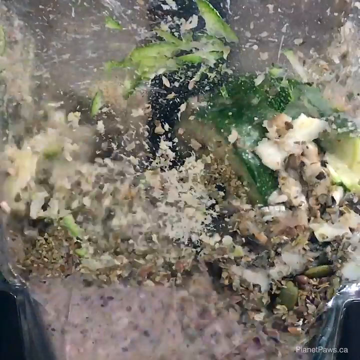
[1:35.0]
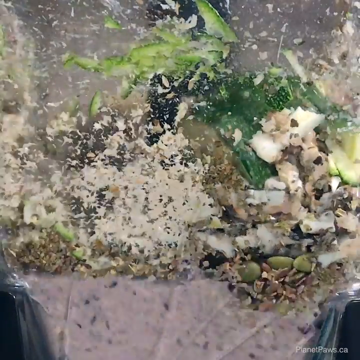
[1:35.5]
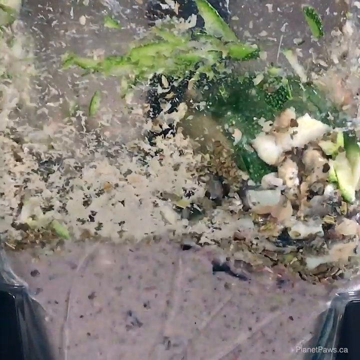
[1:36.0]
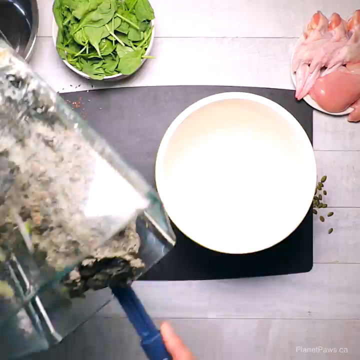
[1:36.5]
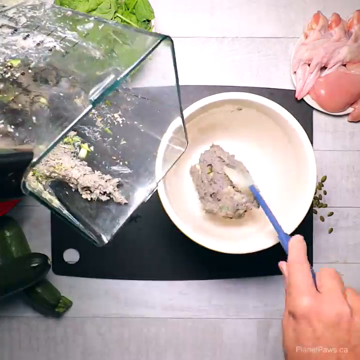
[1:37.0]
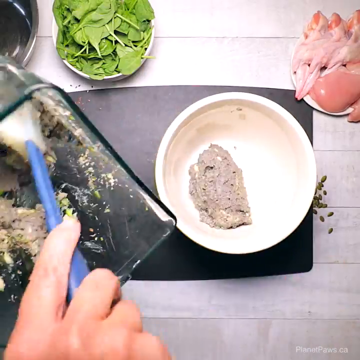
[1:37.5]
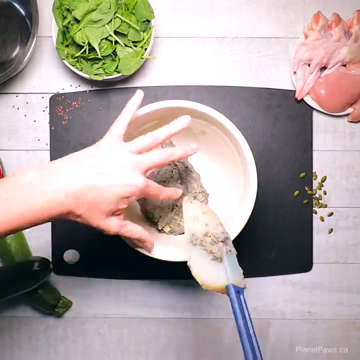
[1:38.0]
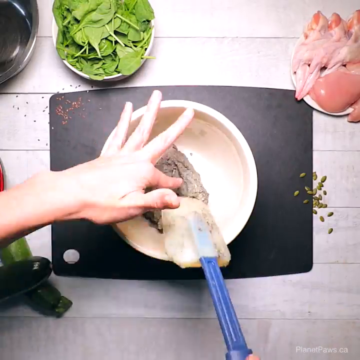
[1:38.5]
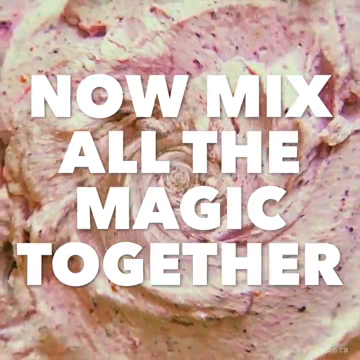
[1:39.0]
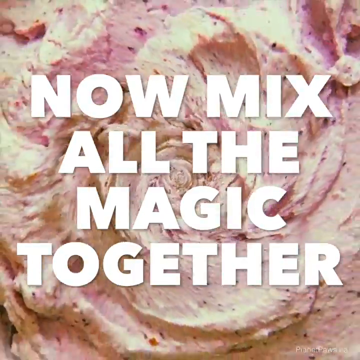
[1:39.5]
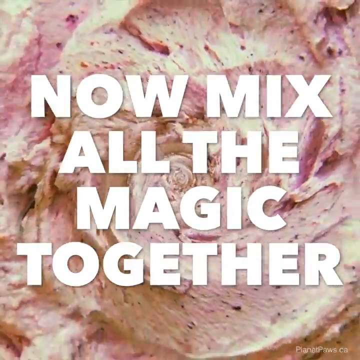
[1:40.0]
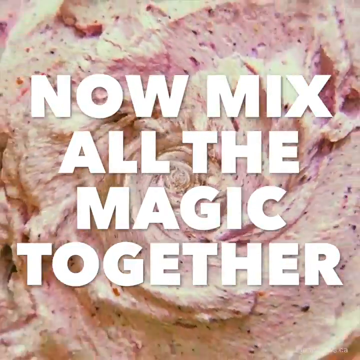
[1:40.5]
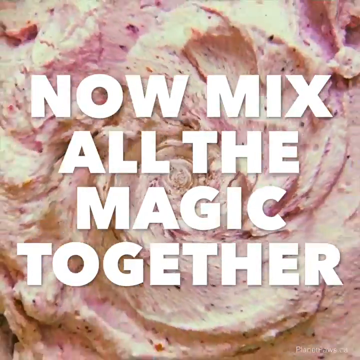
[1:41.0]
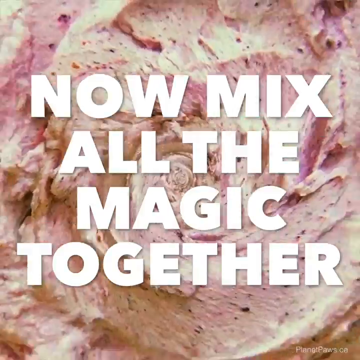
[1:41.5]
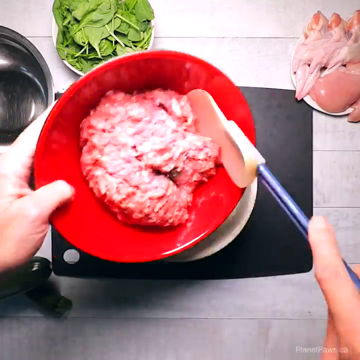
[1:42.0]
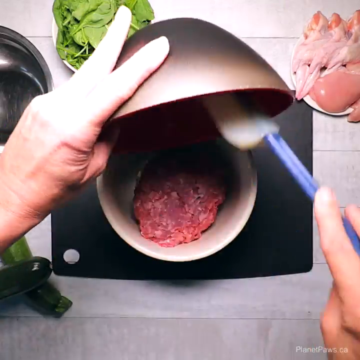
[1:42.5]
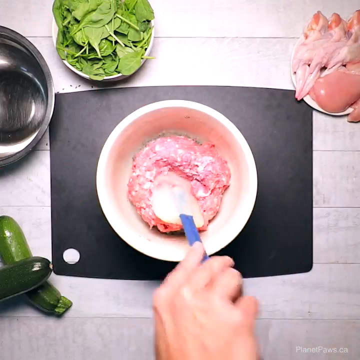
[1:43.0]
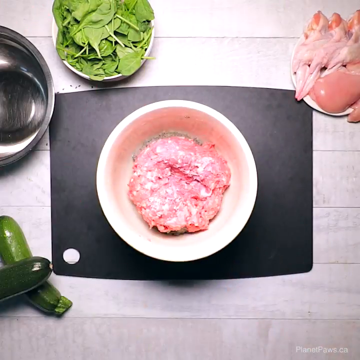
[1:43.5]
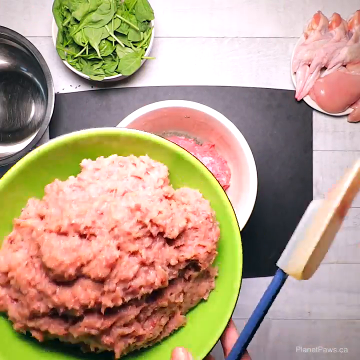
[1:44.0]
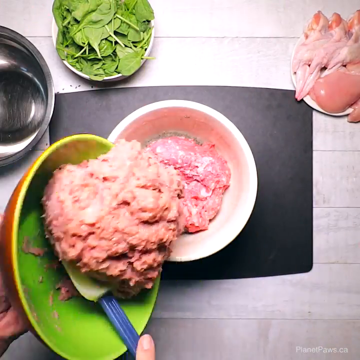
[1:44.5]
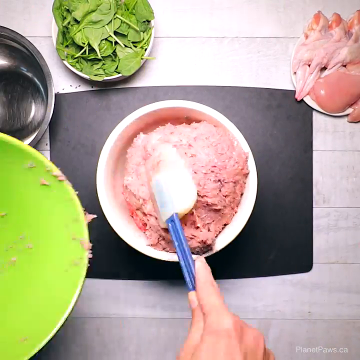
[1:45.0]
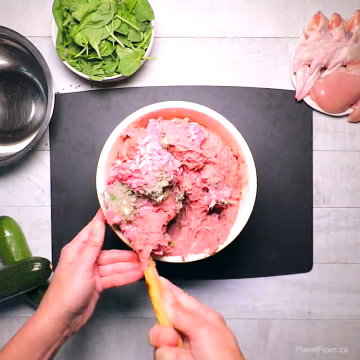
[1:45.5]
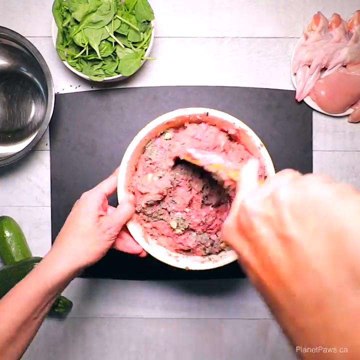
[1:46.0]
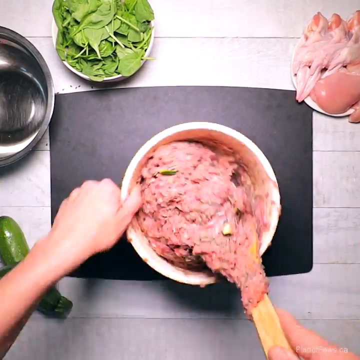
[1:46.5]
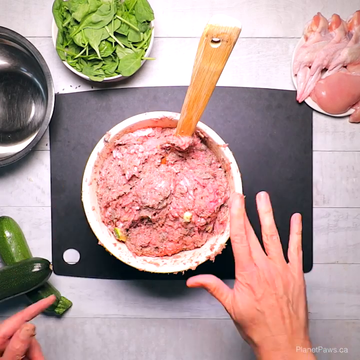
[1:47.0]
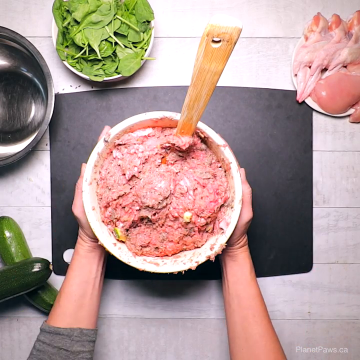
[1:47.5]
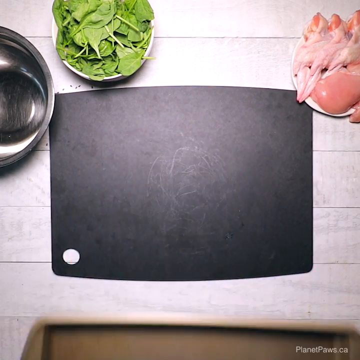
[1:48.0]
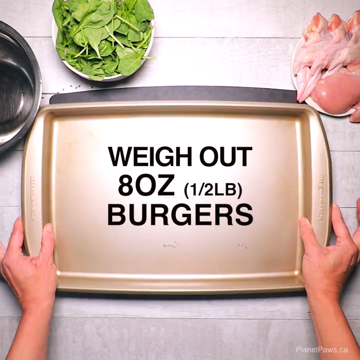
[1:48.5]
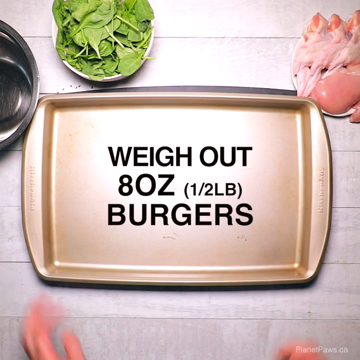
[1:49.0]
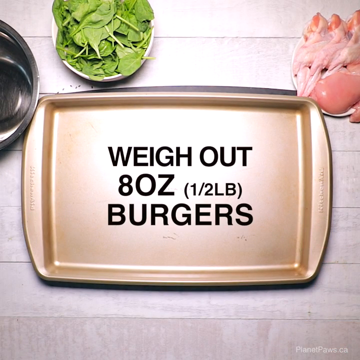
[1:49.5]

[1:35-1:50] The video instructs mixing everything together. The blended contents, which look like a gray mess, appear to go from the blender into a bowl first, and the other ingredients are then mixed in, though it is not entirely clear whether things are being mixed in the bowl or the blender. The result looks like a giant doggie meatloaf. The instructions say to weigh it out into eight-ounce burgers on a baking pan.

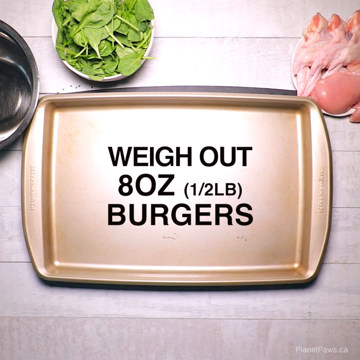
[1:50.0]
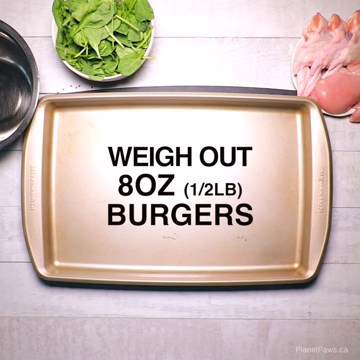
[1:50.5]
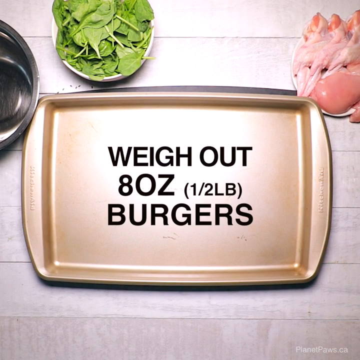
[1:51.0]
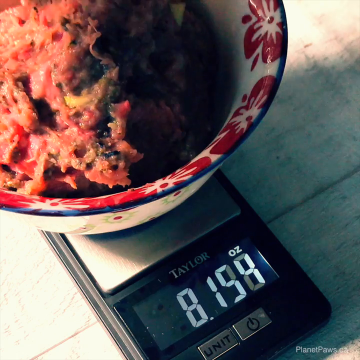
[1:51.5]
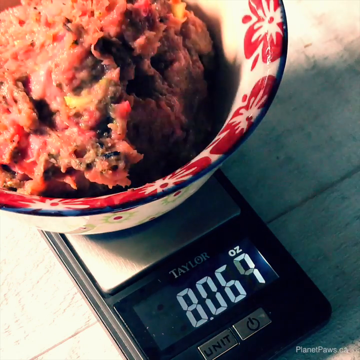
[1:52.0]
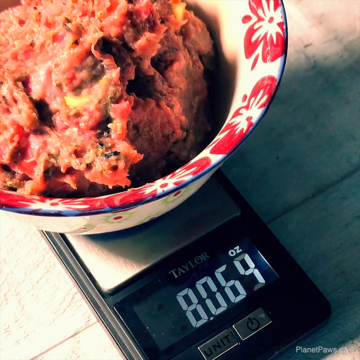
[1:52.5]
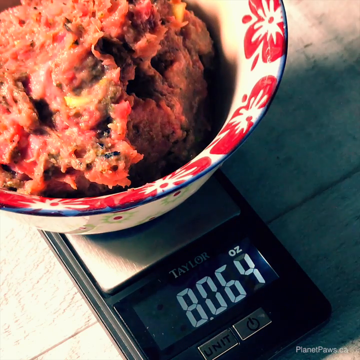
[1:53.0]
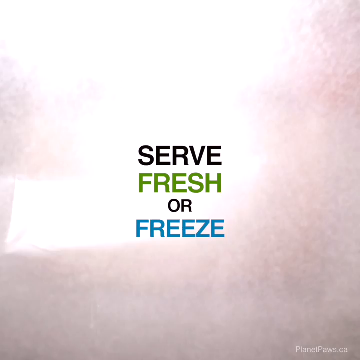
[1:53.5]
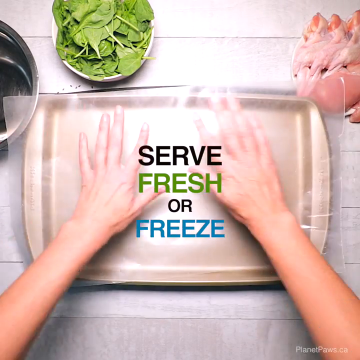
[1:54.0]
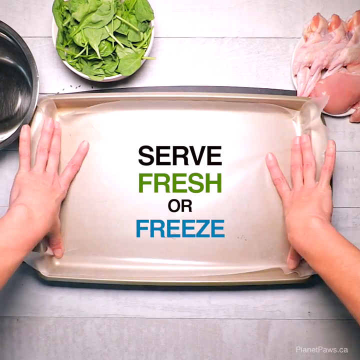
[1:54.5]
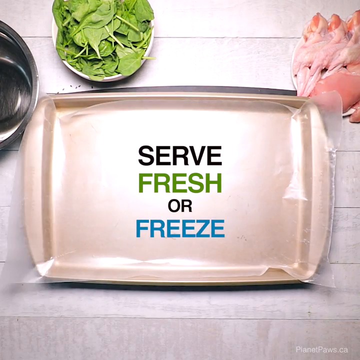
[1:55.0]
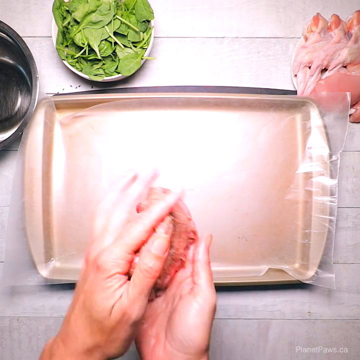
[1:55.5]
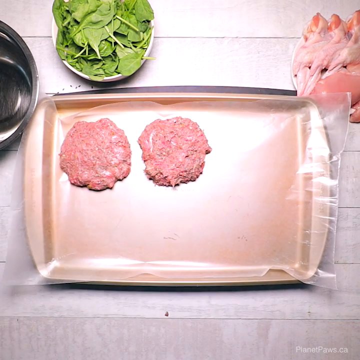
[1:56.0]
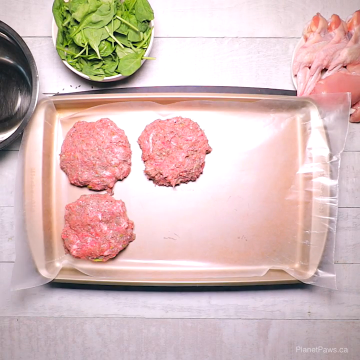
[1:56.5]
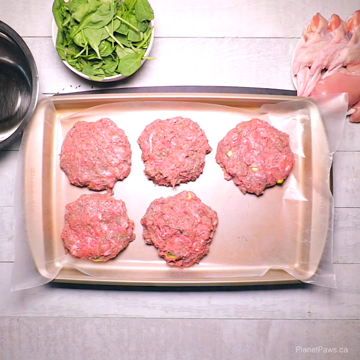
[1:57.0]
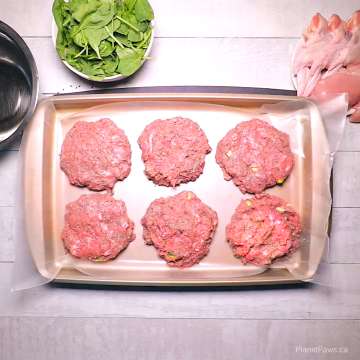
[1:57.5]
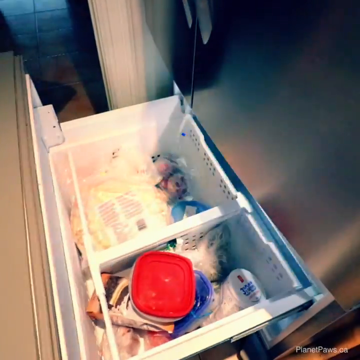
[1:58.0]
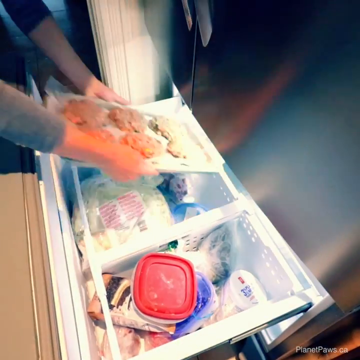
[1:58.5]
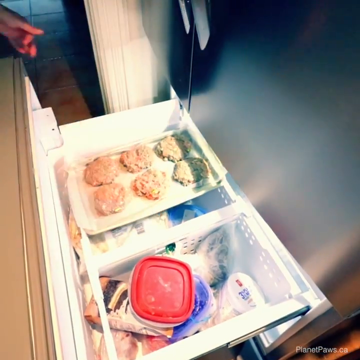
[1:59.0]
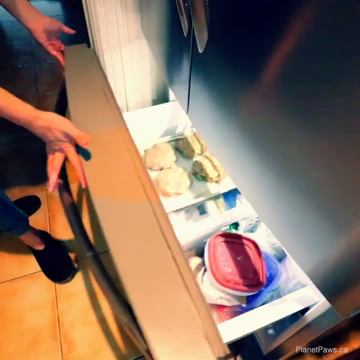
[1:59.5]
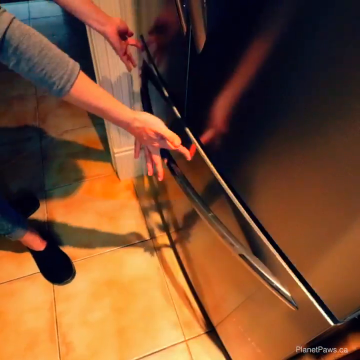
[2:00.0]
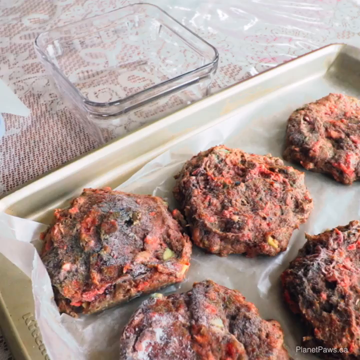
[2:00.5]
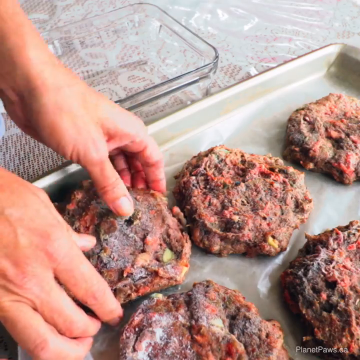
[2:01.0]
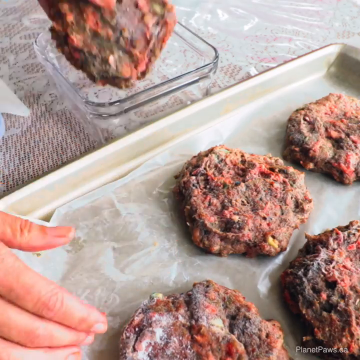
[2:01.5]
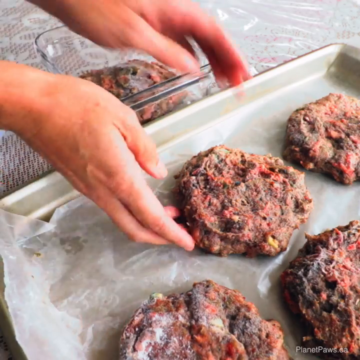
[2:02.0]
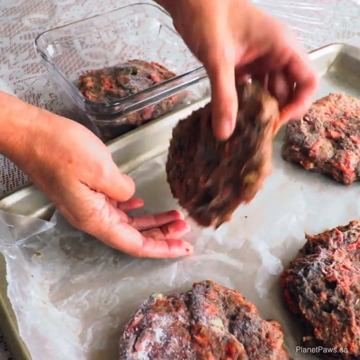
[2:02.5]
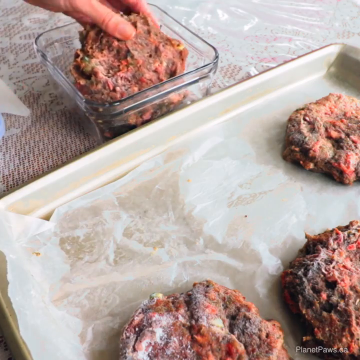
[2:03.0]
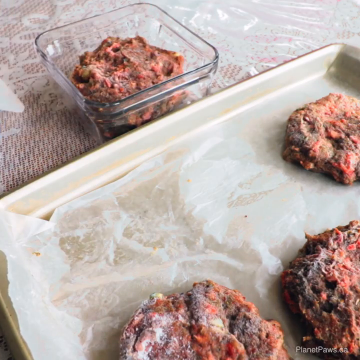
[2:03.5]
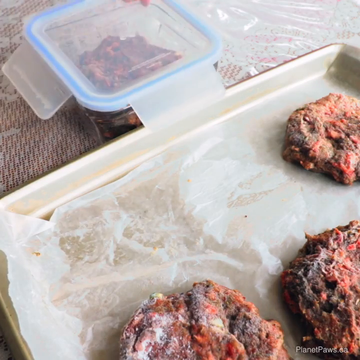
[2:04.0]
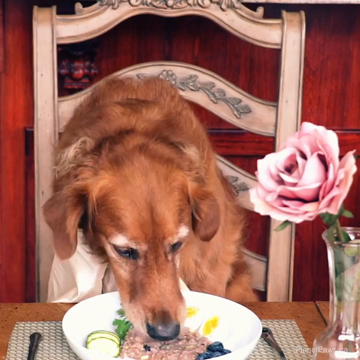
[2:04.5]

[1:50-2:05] After the 8-ounce burgers are weighed out, the text "serve fresh or freeze" appears. Frozen burgers are put into a Tupperware container and placed in a freezer. Nothing indicates that the burgers are meant to be cooked; the video seems to imply feeding them raw.